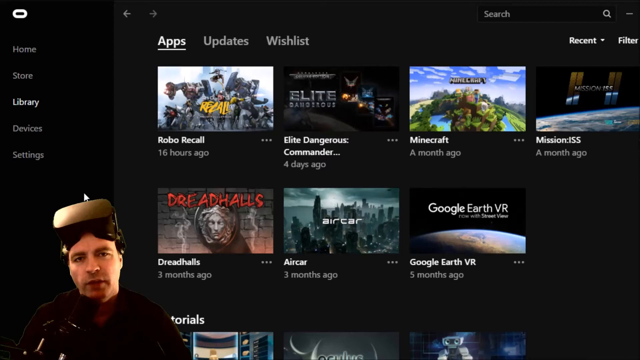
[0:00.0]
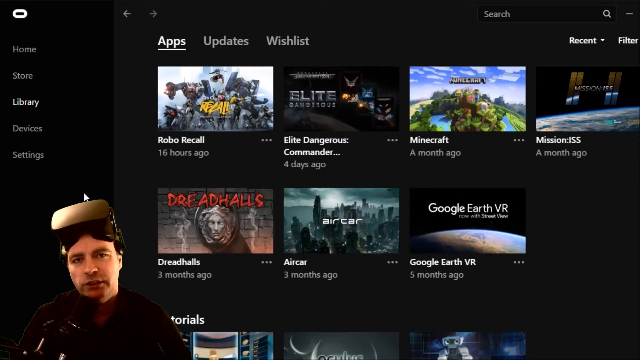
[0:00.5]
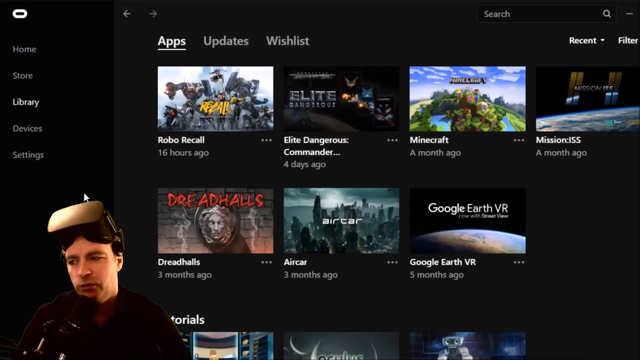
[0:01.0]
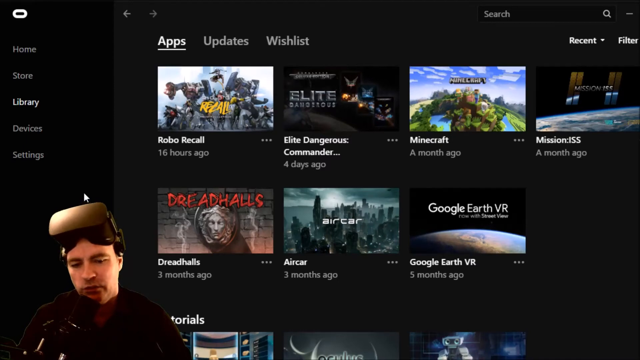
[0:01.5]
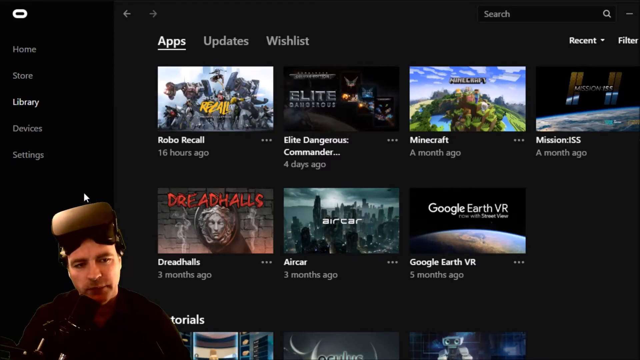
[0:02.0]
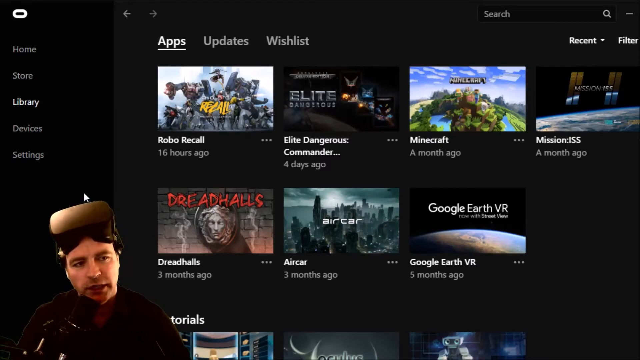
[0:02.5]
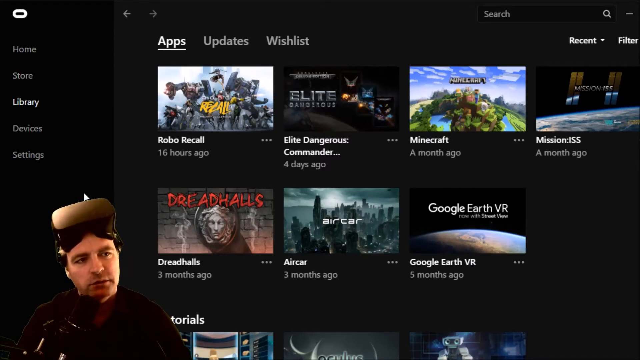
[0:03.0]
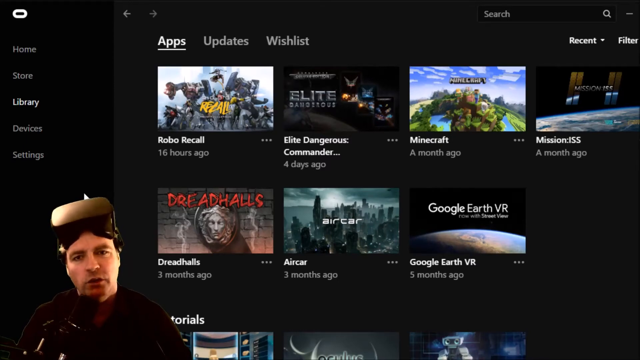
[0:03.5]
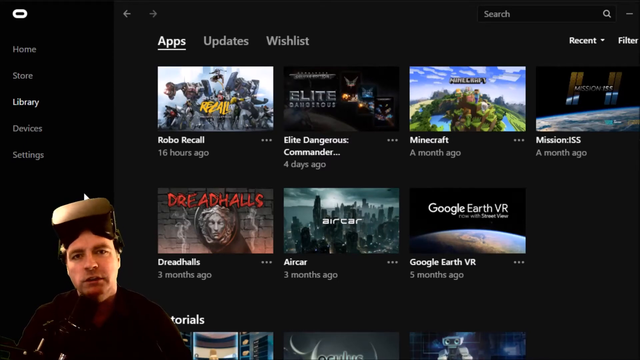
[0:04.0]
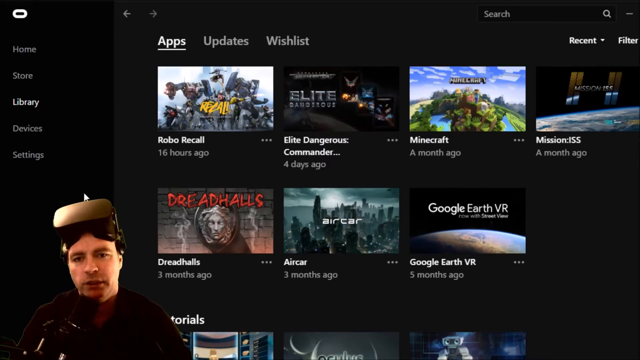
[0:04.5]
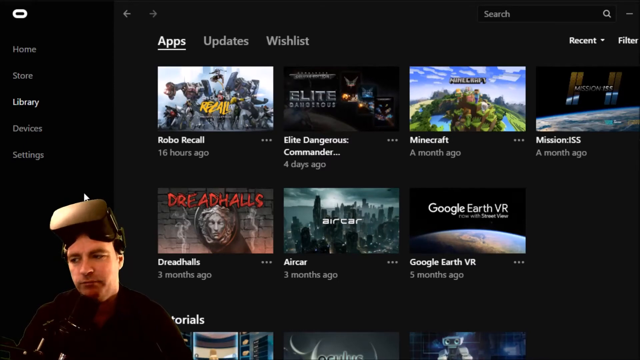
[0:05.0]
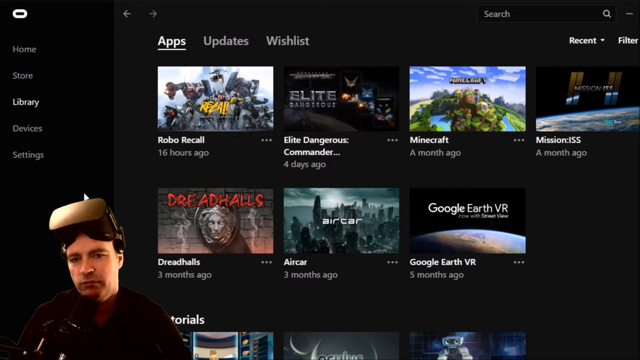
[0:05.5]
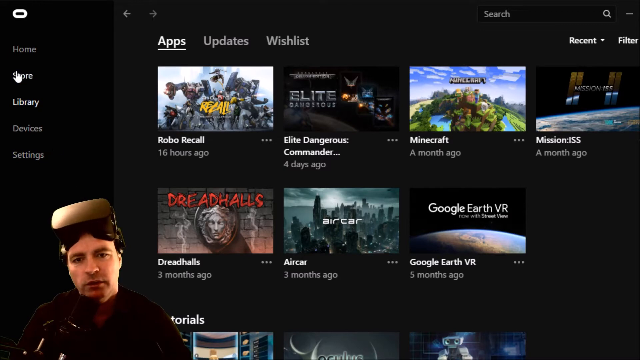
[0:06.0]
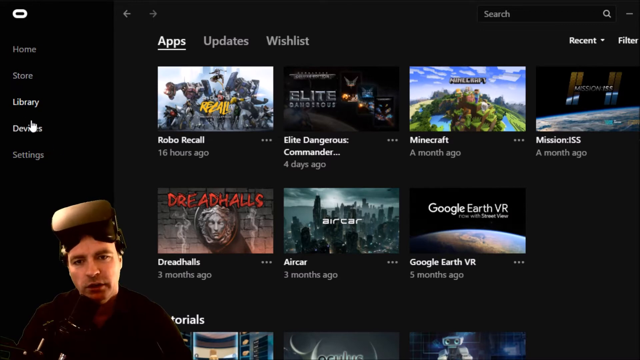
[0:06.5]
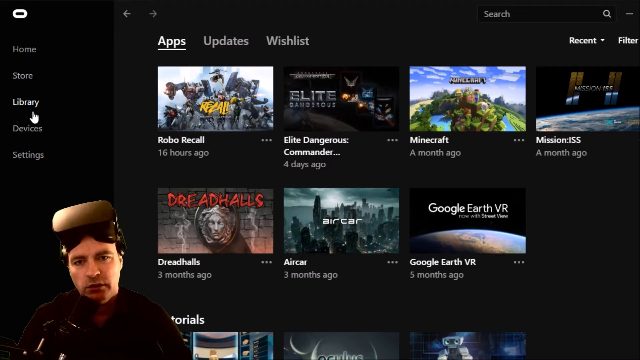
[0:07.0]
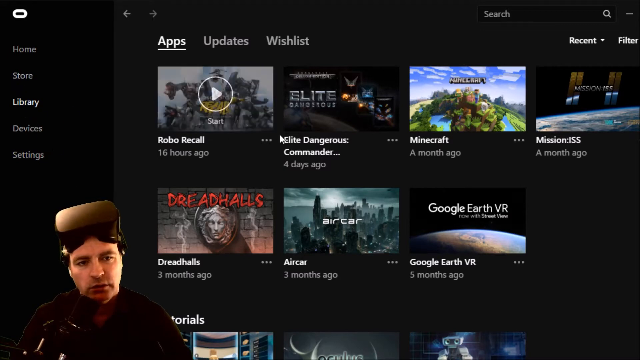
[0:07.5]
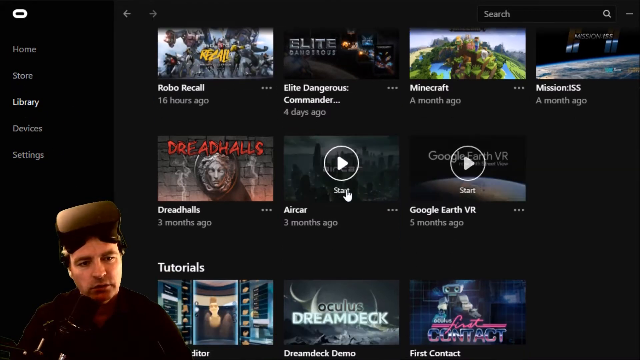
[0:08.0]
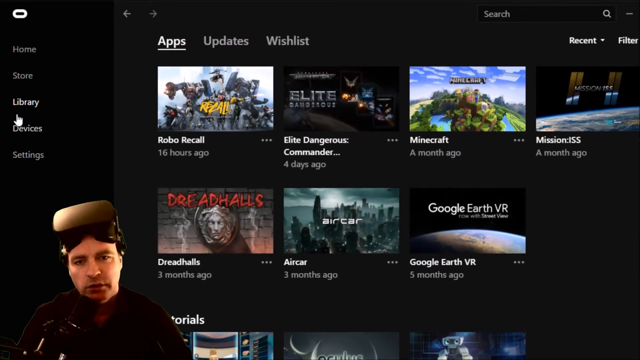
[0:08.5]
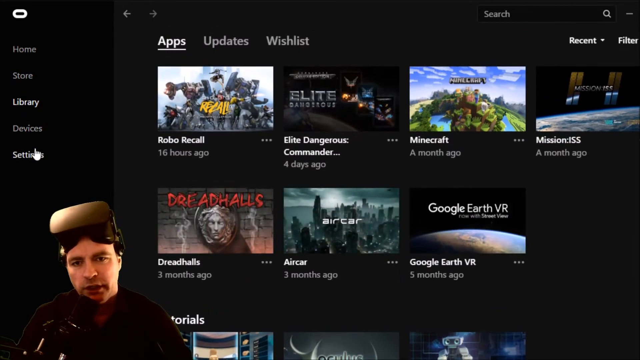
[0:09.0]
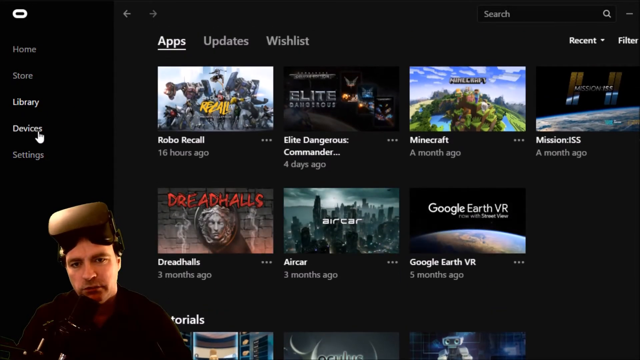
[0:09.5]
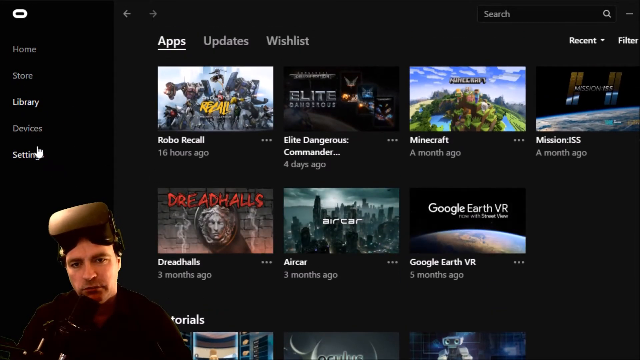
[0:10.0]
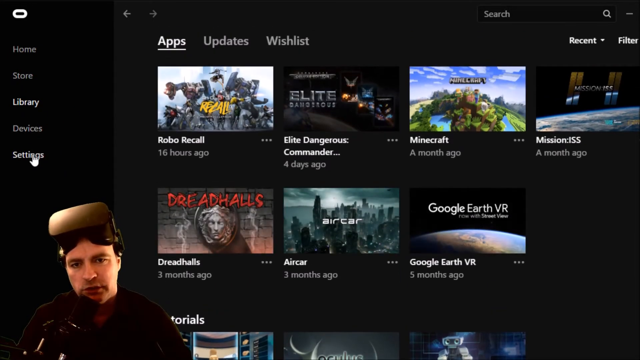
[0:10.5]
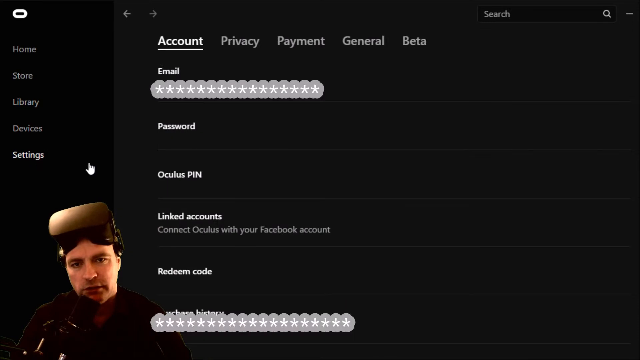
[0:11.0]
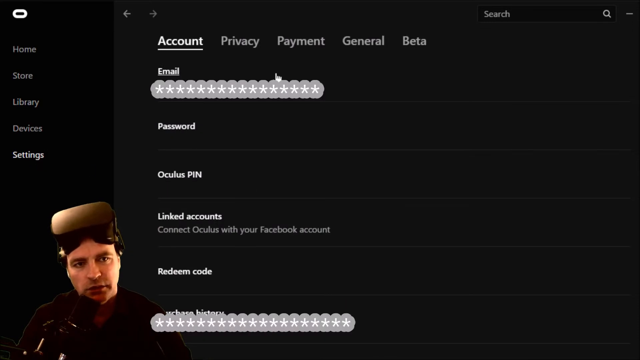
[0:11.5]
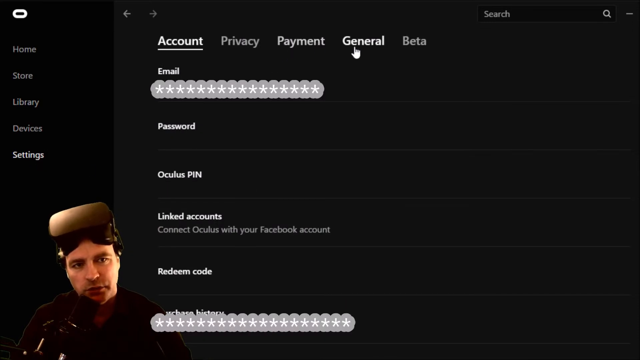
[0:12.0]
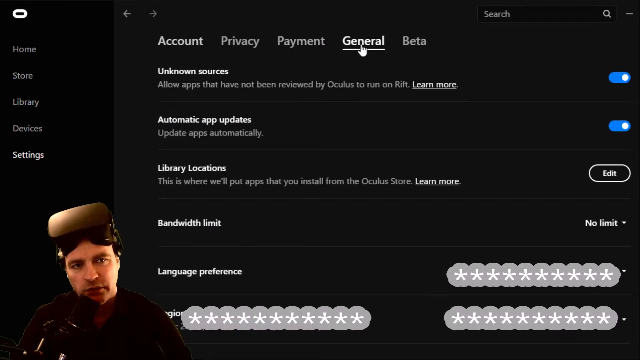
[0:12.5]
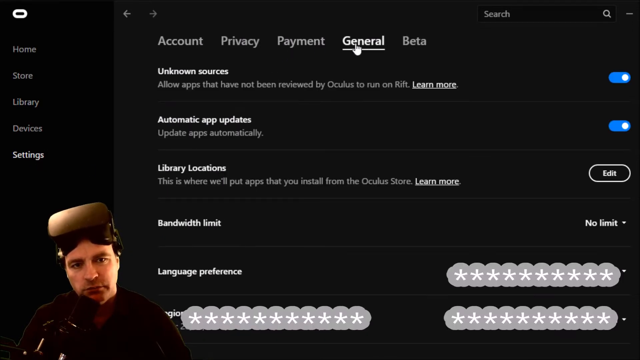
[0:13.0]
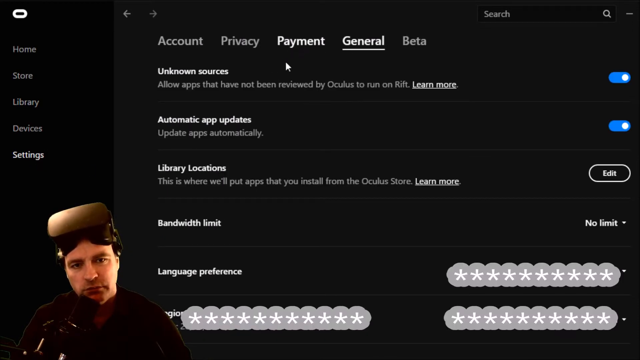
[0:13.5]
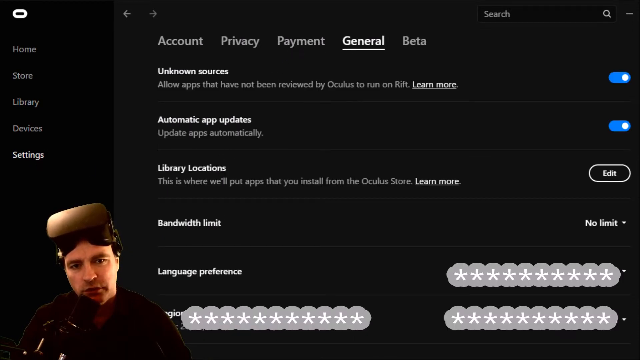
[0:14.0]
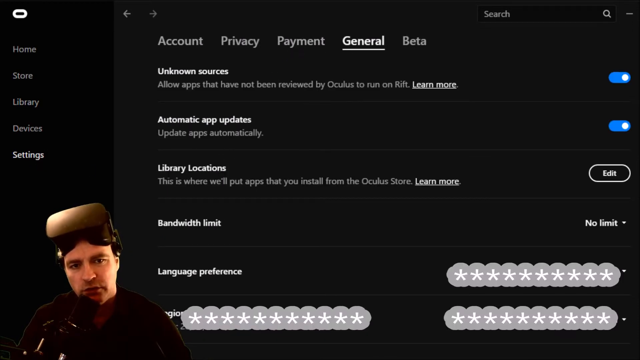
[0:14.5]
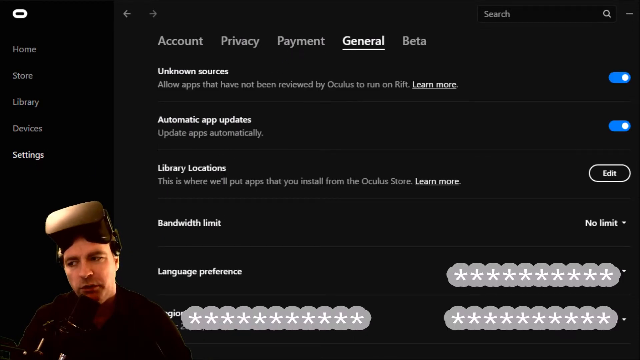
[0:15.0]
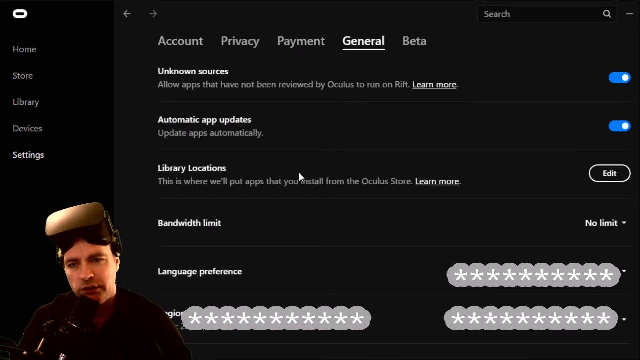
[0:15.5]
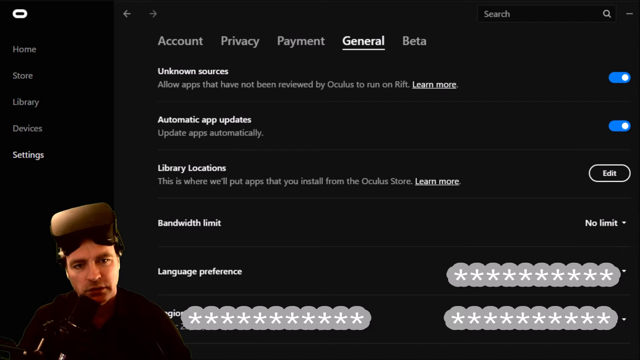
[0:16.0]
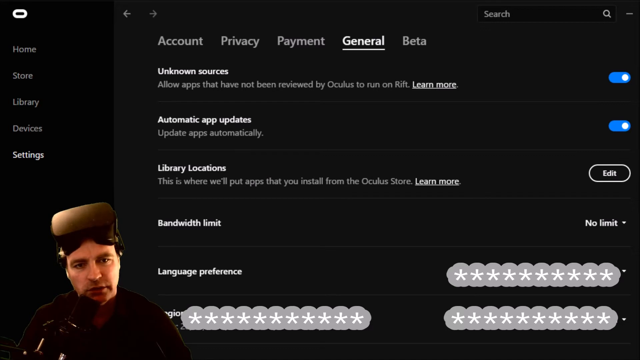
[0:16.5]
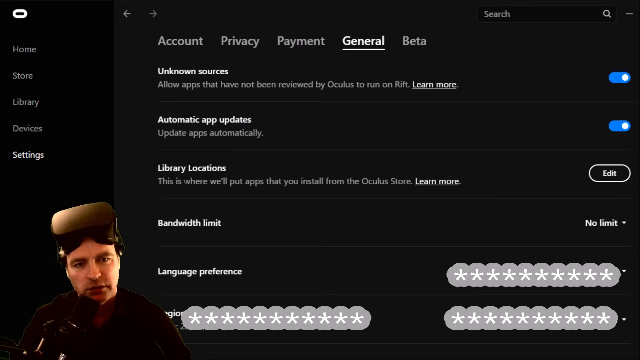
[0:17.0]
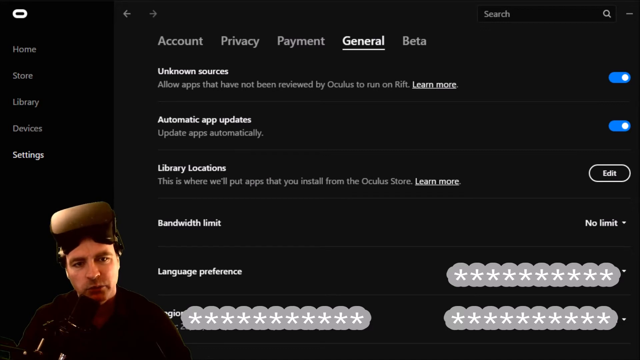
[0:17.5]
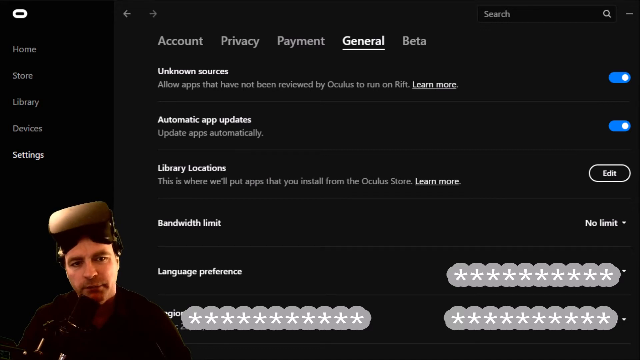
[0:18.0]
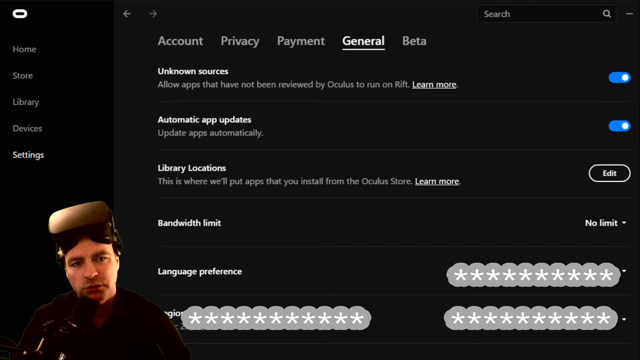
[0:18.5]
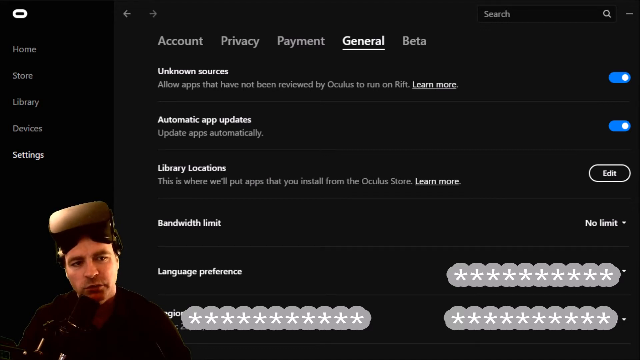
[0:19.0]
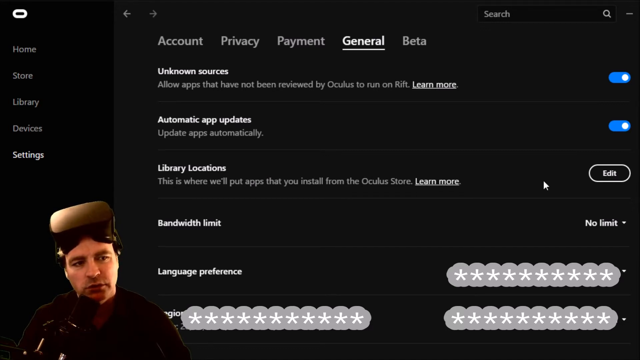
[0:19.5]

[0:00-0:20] A screen is in the background, and in the lower left corner is a person, shown only from the head, wearing virtual reality glasses on his forehead and a black shirt, so little of his body is visible. The screen shows a list of different videos, with the text "Apps", "Updates" and "Wishlist"; the Apps tab is selected. The first row lists "Robo Recall" with a small picture of a robot, then "Elite, Dangerous Commander", "Minecraft" and "Mission ISS", and underneath are "Dreadfalls", "Aircar" and "Google Earth VR", various VR options. On the left side of the screen, a menu reads "Home", "Store", "Library", "Devices" and "Setting". His mouse pointer hovers between Devices and Setting, then he clicks Setting, which opens an account screen with "Privacy", "Payment", "General" and "Data", an email address, "Startout", and fields for "Password" and "Oculus Pin". He clicks other items such as General, kind of points out "Library Locations", his mouth moving as he talks, and then clicks Edit.